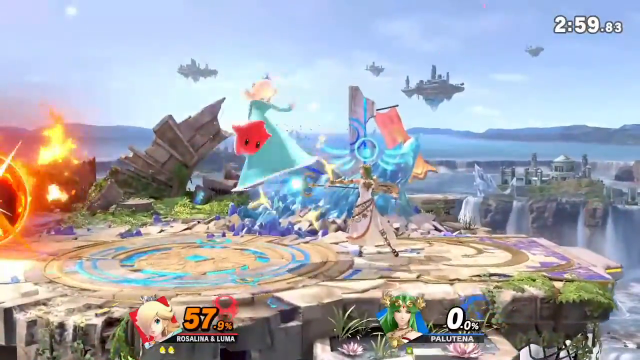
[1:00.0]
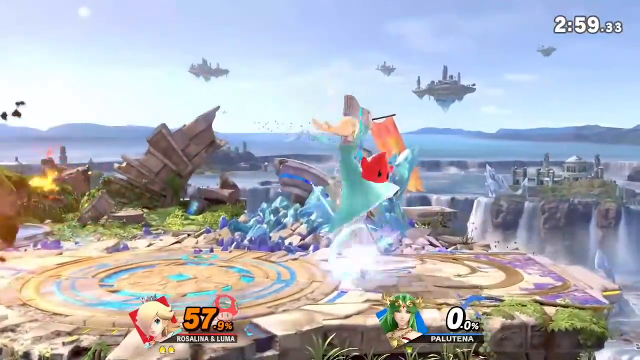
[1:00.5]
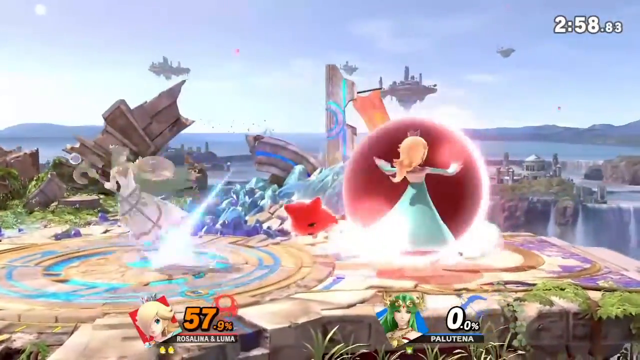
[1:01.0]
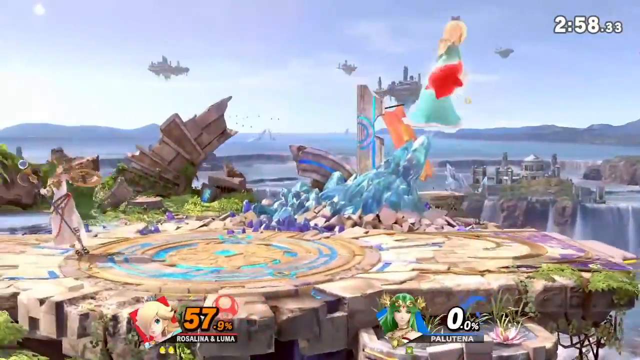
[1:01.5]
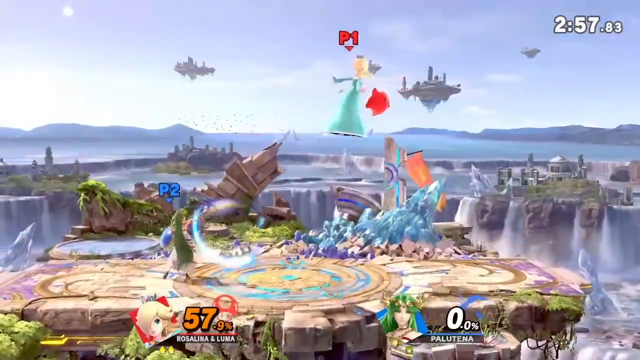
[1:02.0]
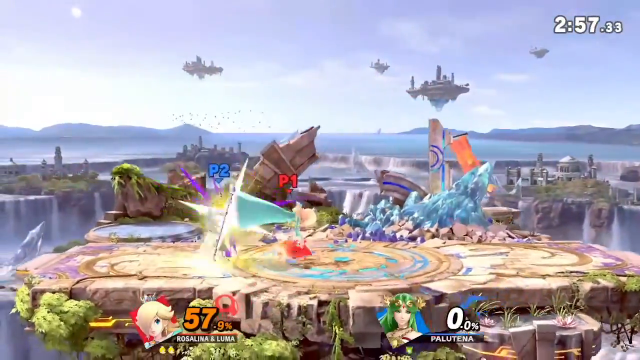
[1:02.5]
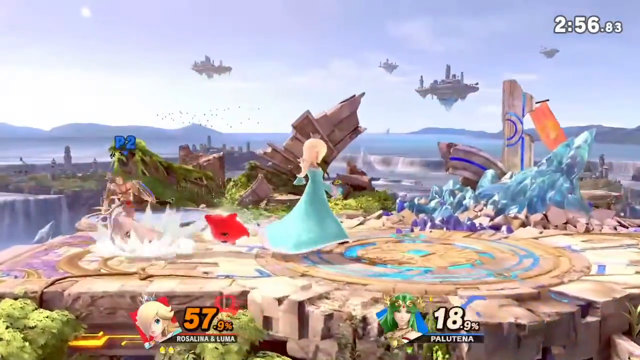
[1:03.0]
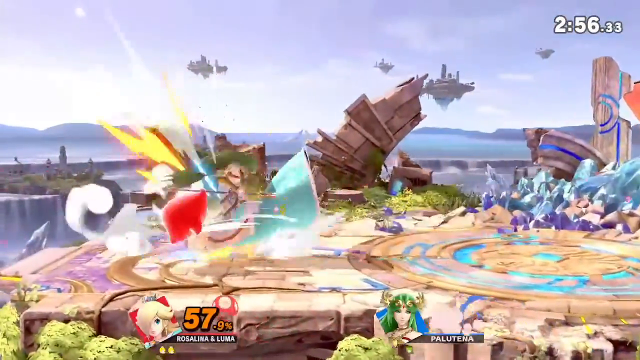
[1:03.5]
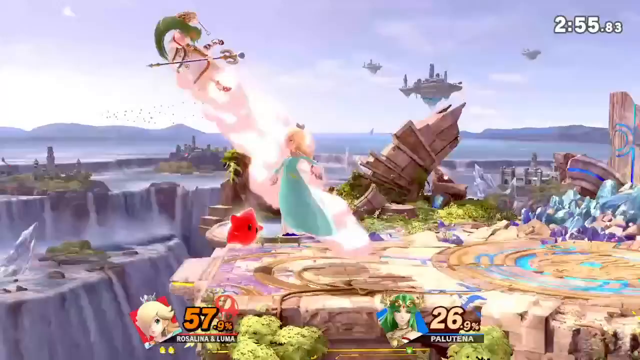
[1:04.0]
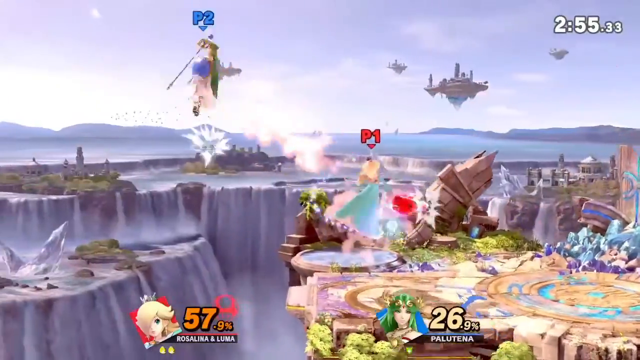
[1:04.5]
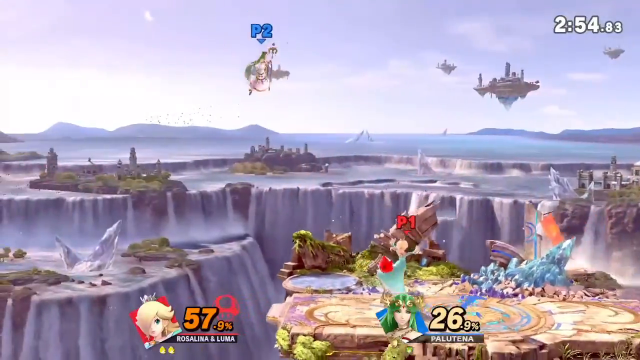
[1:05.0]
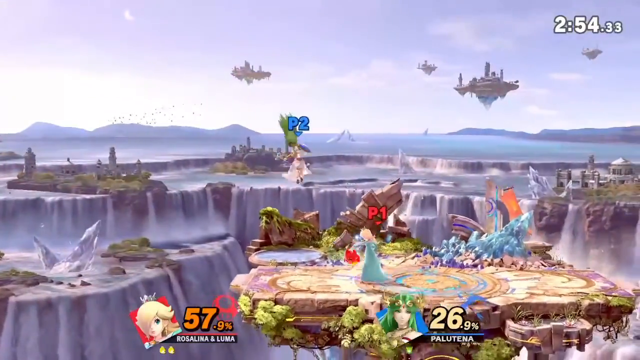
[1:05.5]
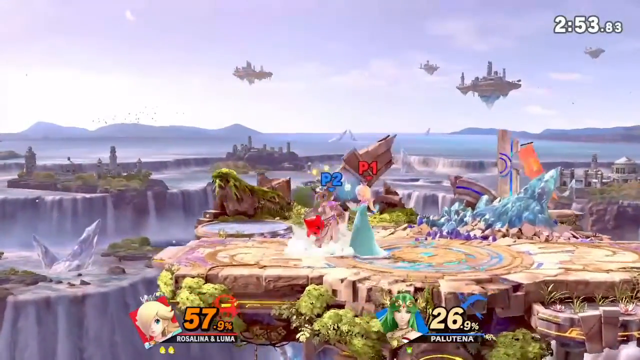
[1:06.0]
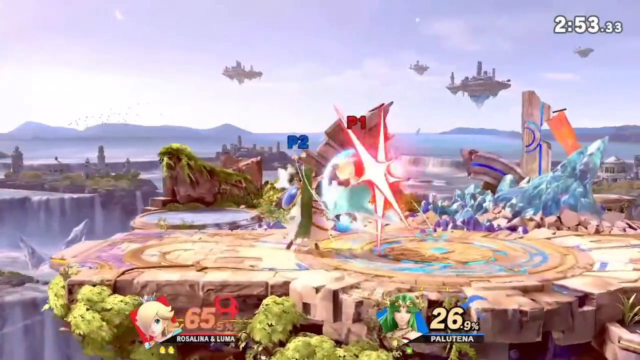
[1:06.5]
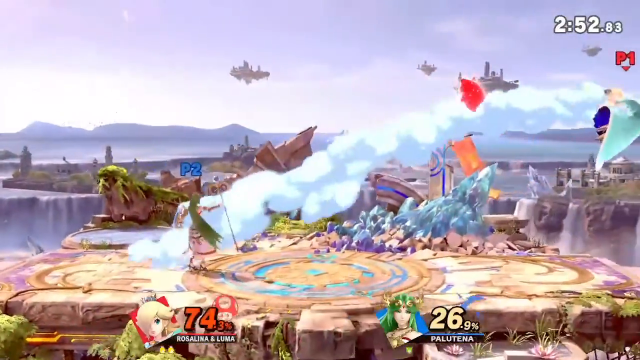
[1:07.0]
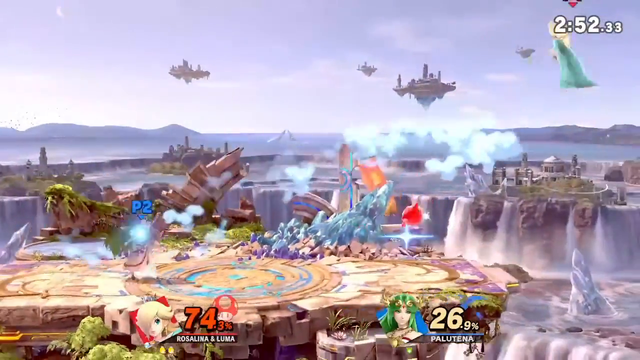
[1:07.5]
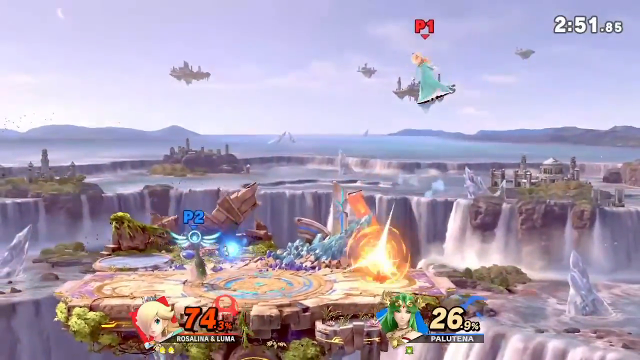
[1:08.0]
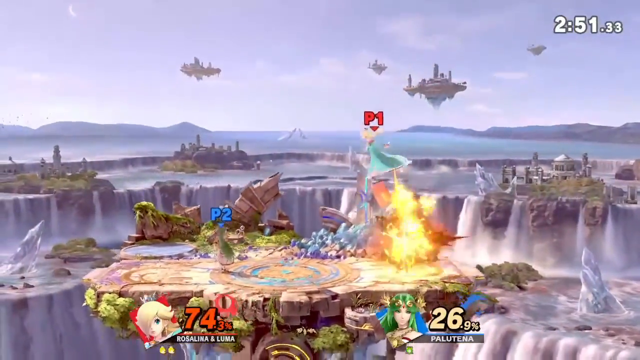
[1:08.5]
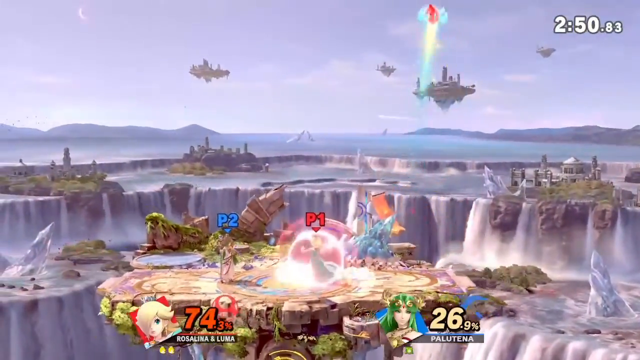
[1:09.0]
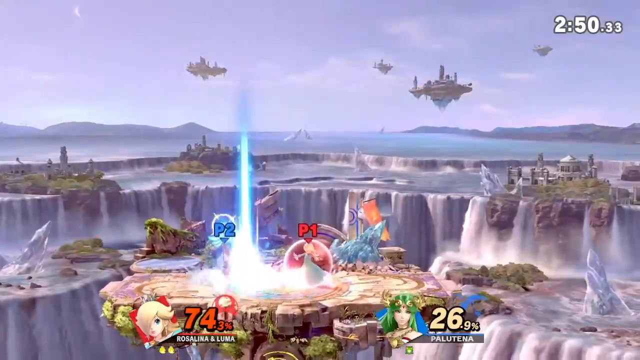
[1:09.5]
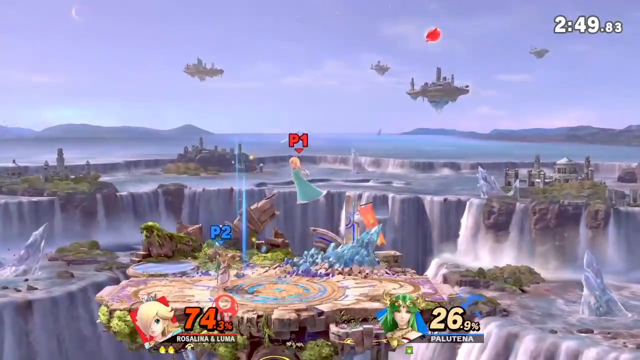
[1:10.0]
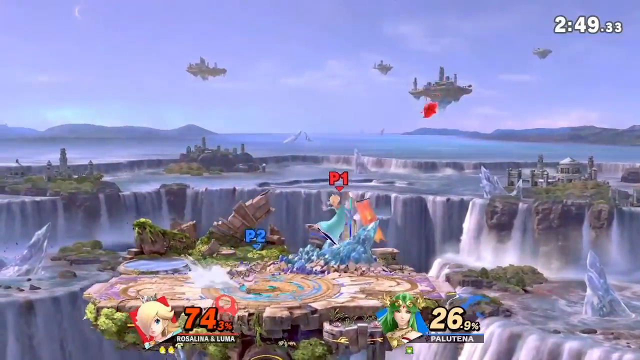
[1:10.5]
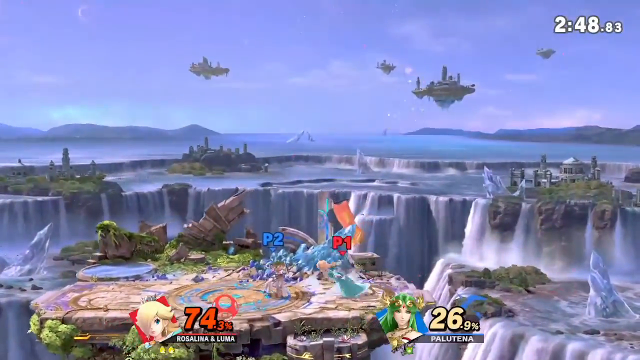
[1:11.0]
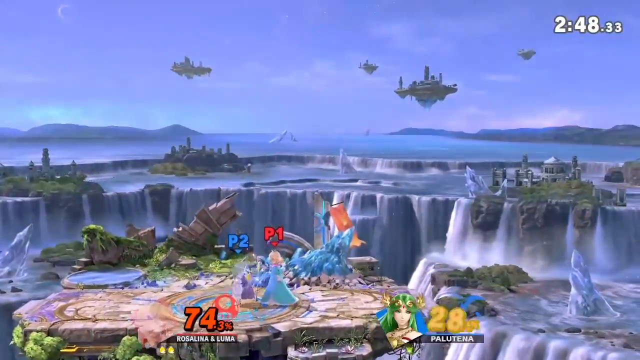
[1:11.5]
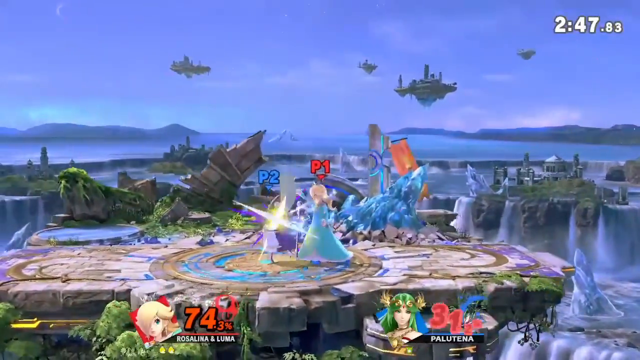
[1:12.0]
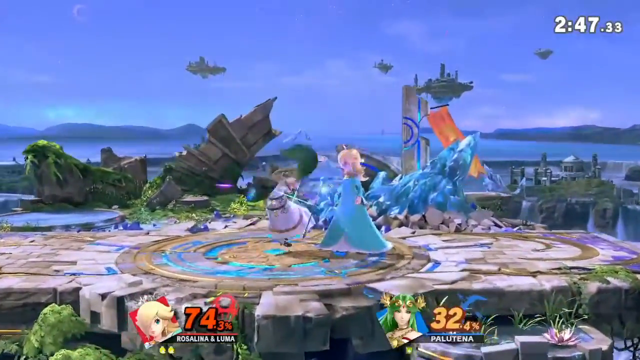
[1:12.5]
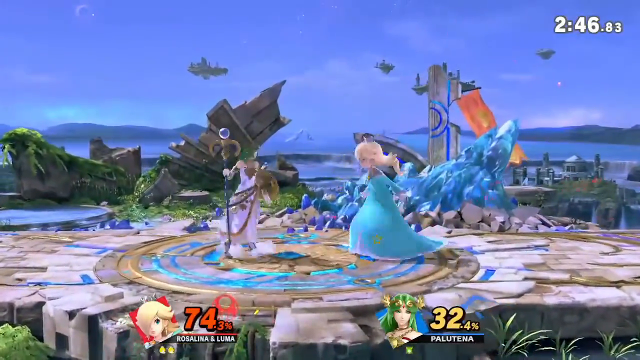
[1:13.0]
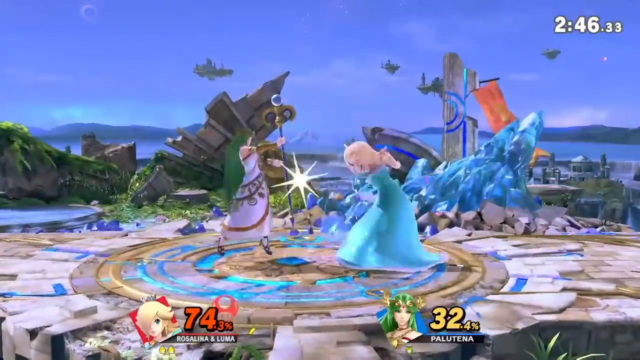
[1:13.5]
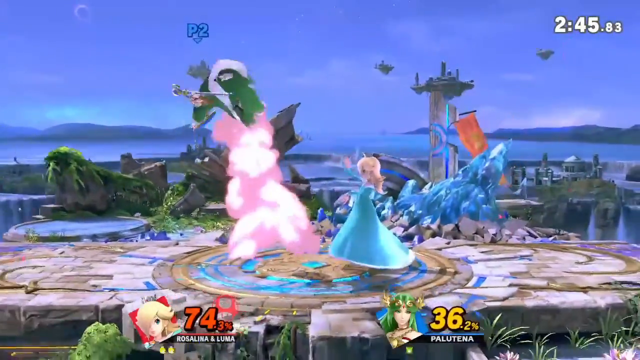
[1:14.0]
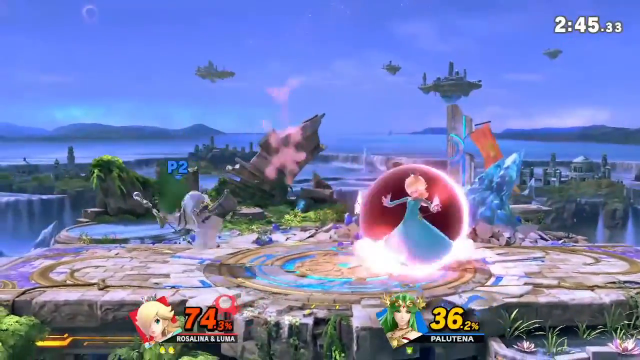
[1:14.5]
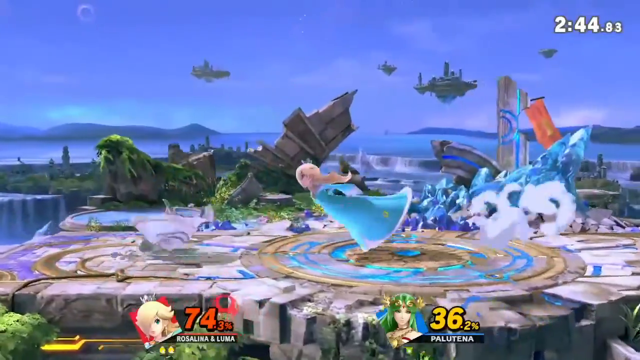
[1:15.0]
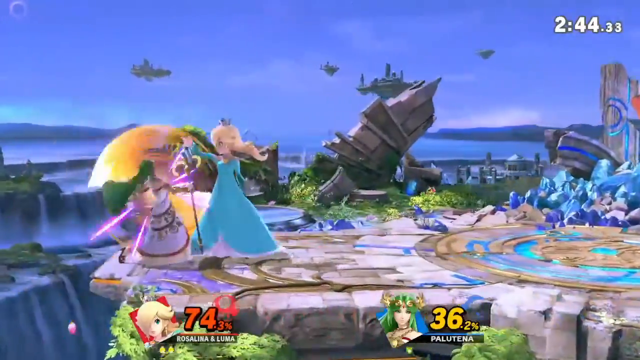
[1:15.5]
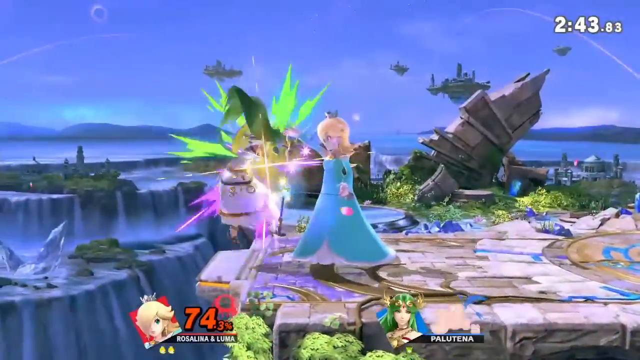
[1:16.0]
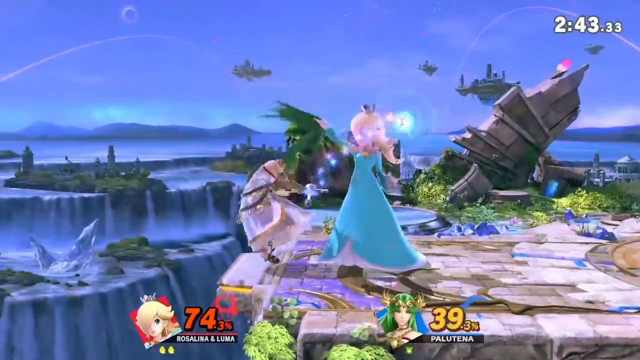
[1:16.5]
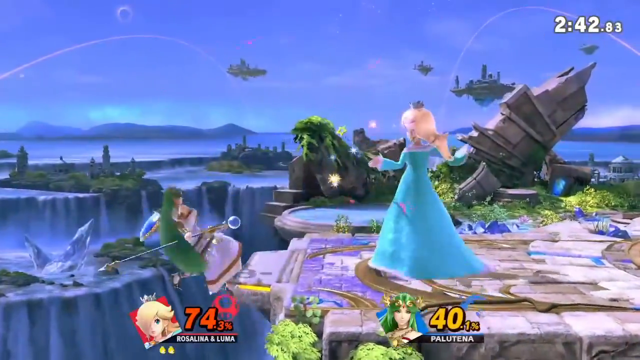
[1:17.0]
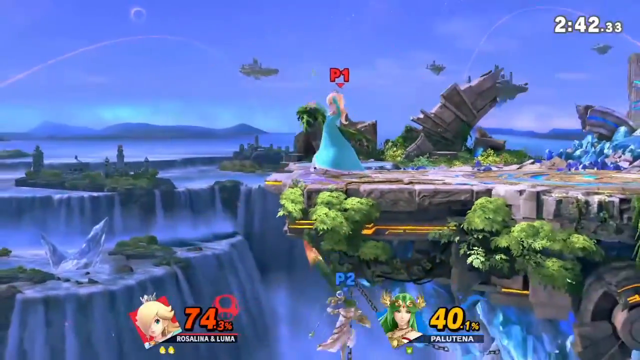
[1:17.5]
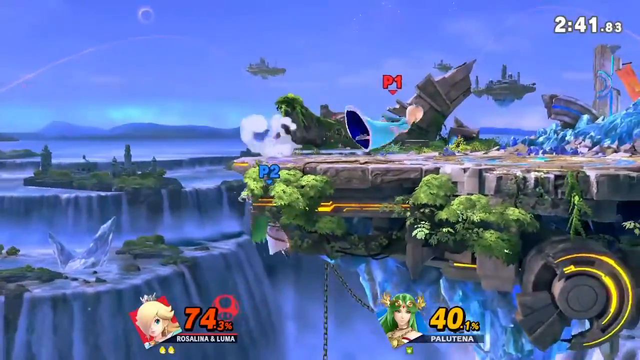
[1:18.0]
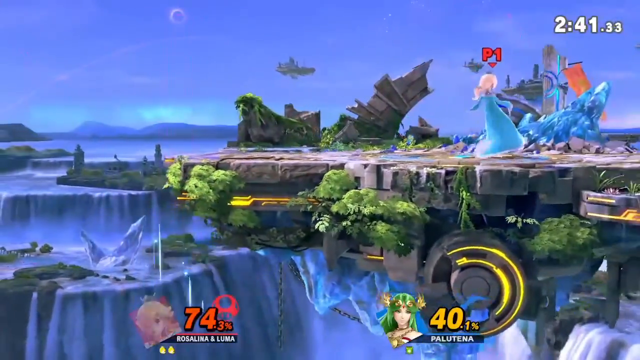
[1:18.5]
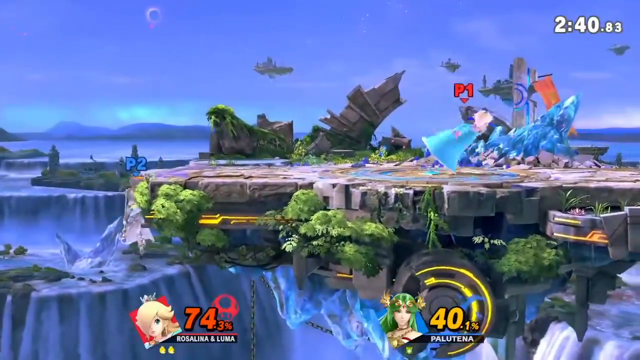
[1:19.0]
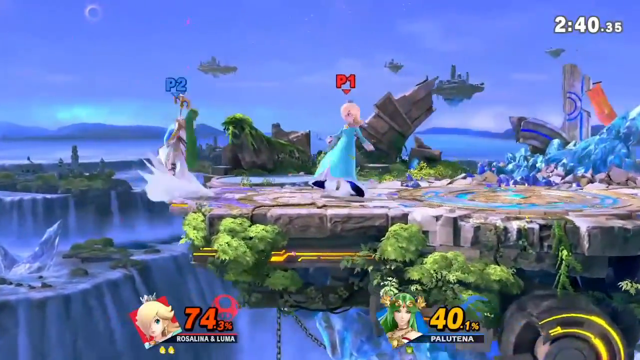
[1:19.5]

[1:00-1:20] The timer, in white numbers in the top right corner of the screen, counts down to 2 minutes and 59 seconds. The battle between Rosalina, player 1, and Palutena, player 2, continues on the raised platform in the sky, and Rosalina still appears to be winning. Rosalina lands multiple hits back to back, and Palutena's percentage increases rapidly. During this part of the fight the setting appears to change from day to night. In the background there is what looks like the aurora borealis and possibly a moon, and the waterfalls and trees appear to be in dusk lighting instead of the earlier daytime lighting. The one orange and yellow flag remains on the floating stone structure where the two are fighting. Palutena repeatedly gets knocked off the structure but uses a jump skill and climbs up the sides to return to the platform. A chain hangs down underneath the bottom of the floating stone structure.